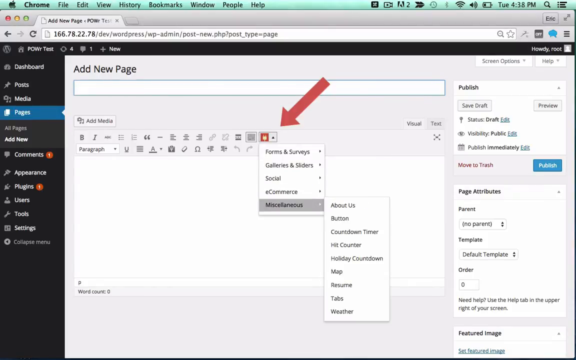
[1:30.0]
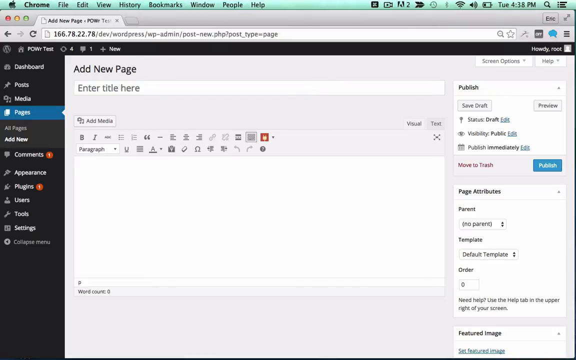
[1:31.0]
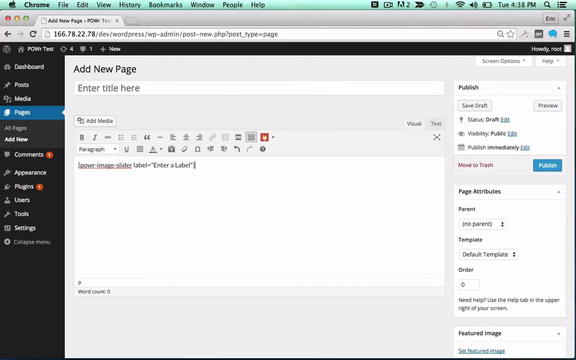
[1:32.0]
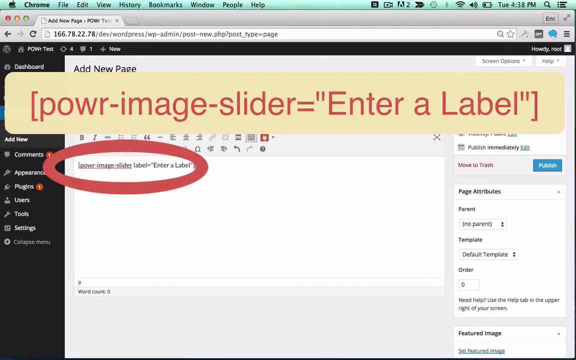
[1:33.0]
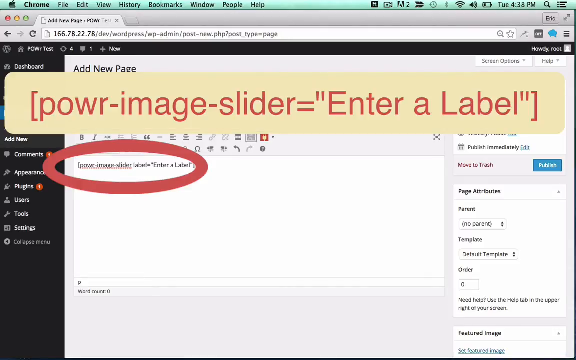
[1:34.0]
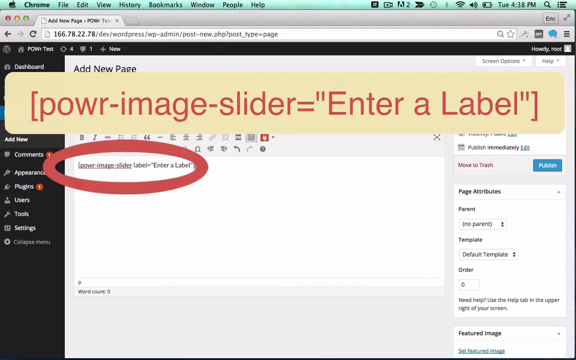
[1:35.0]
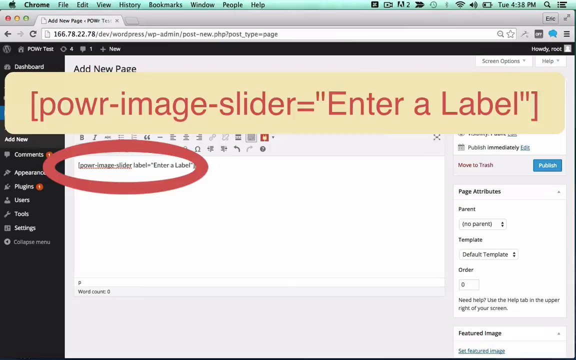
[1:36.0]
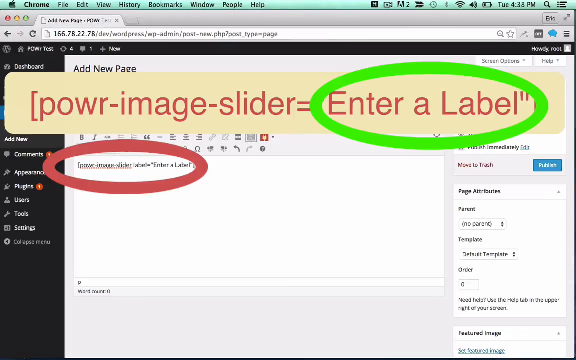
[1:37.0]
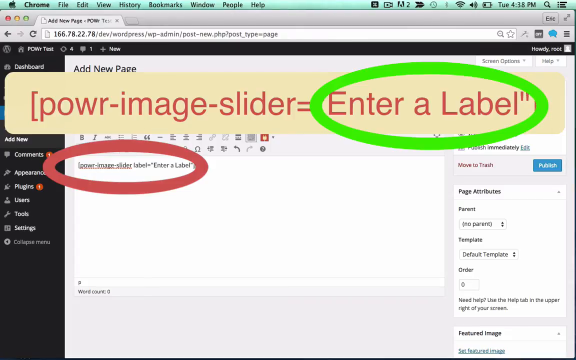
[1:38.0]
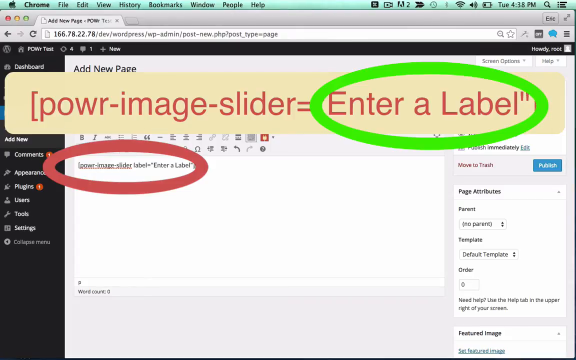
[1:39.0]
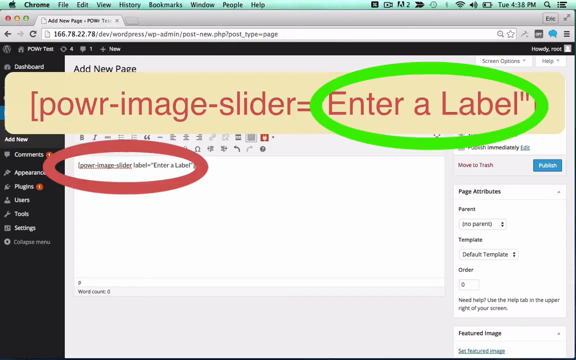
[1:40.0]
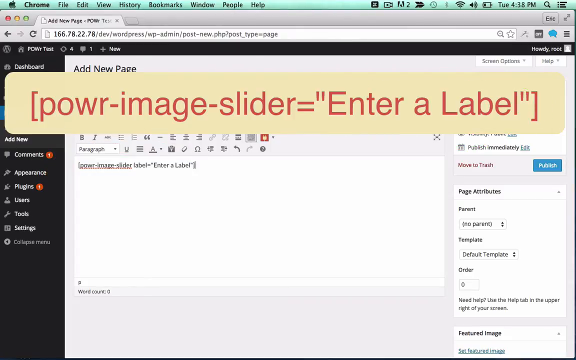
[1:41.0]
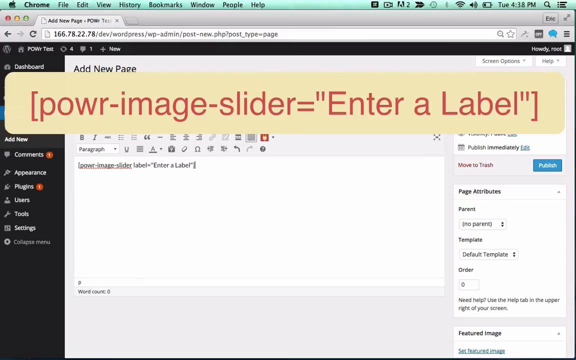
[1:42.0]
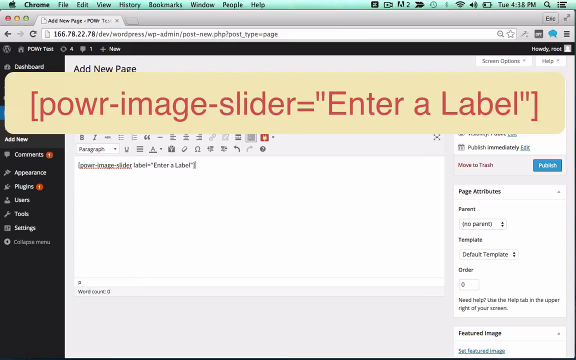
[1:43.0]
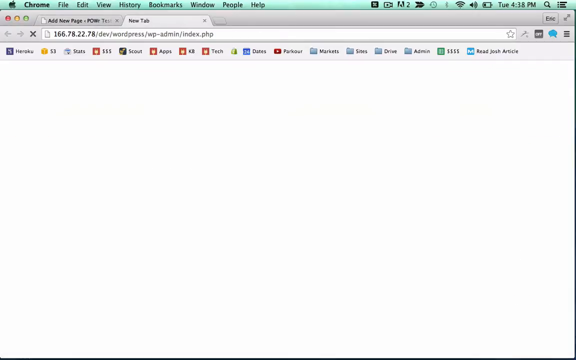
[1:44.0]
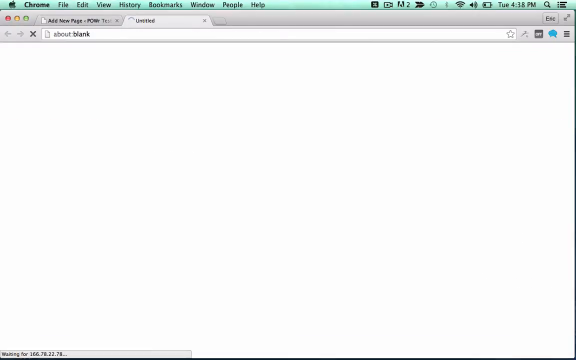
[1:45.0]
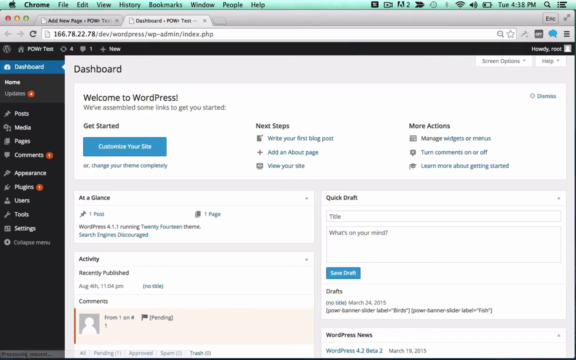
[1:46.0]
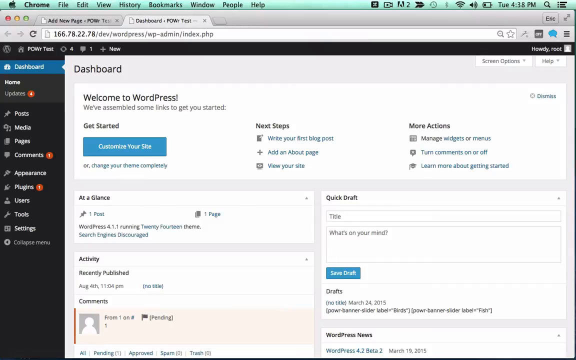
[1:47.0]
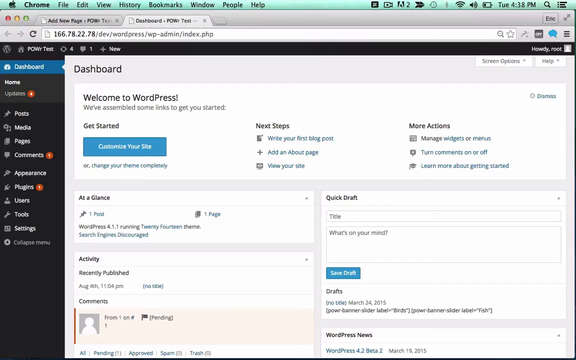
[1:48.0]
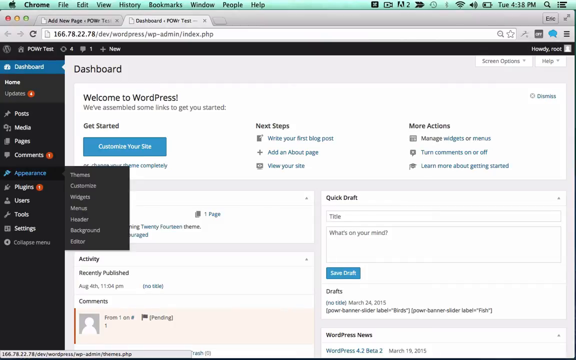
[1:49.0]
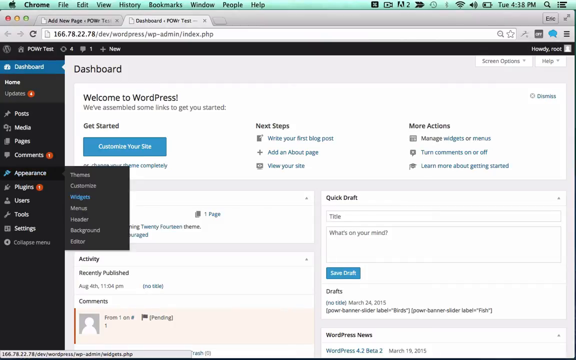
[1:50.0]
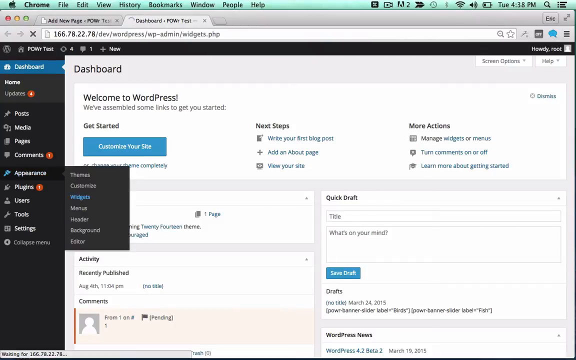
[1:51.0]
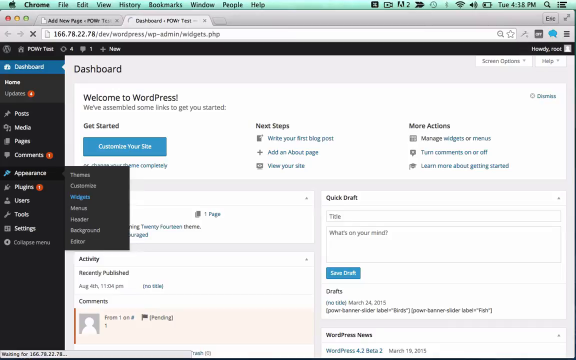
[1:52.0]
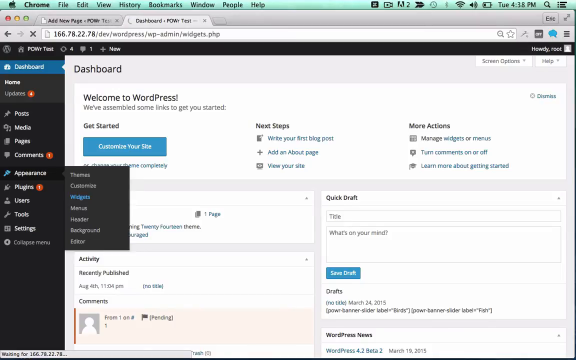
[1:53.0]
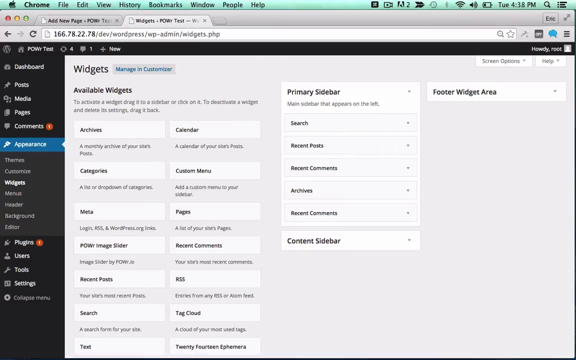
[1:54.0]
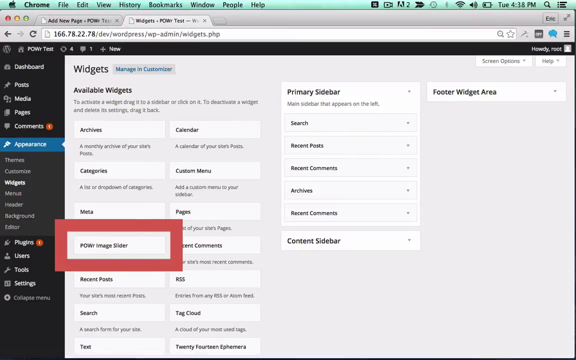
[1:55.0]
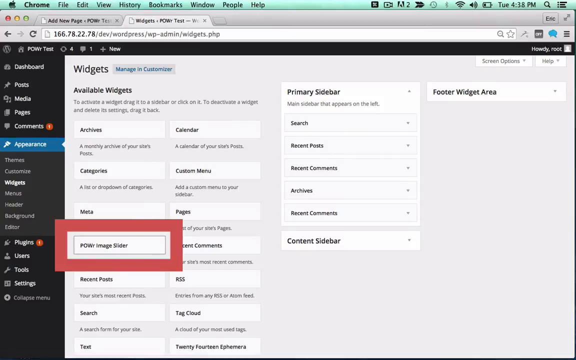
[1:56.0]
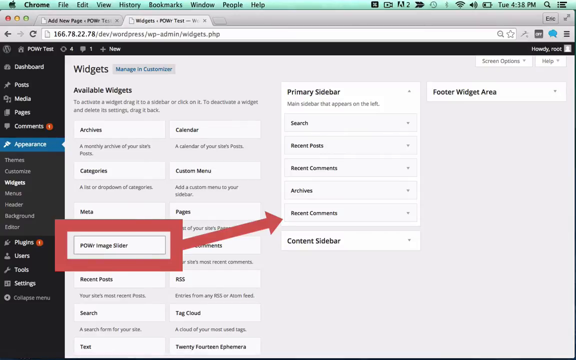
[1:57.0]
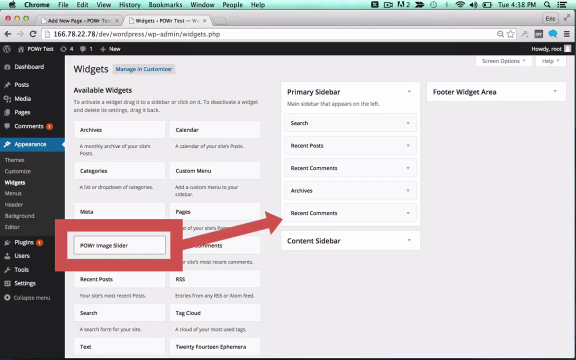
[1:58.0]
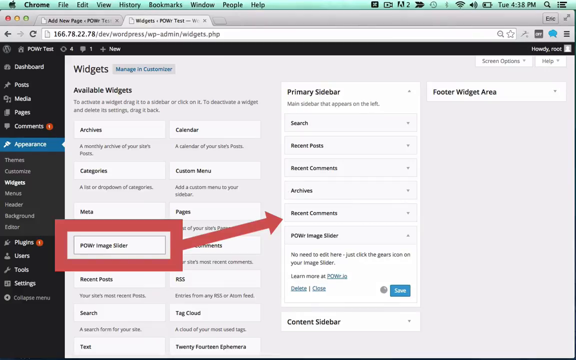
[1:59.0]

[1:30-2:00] He enters text in the text box for a POWr image slider label. In editing, the same text is shown larger in red font inside a yellow rectangle so it can be read clearly: "[power-image-slider slider="enter a label"]". A green circle, also added in post-production, highlights "enter a label". He then opens another tab back to his dashboard and goes to appearance, then widgets. A red square is drawn around a button reading "power image slider", and he points to another button on the same page reading "recent comments".